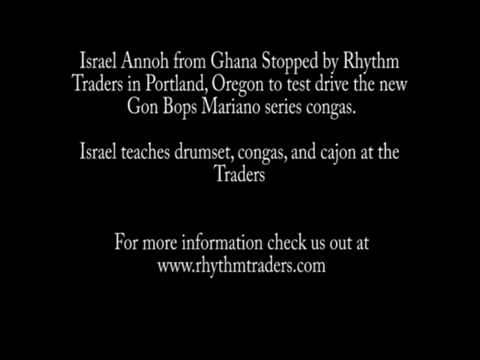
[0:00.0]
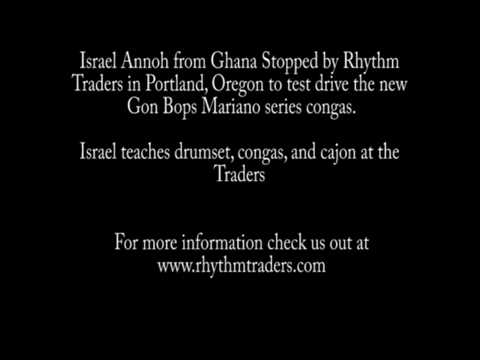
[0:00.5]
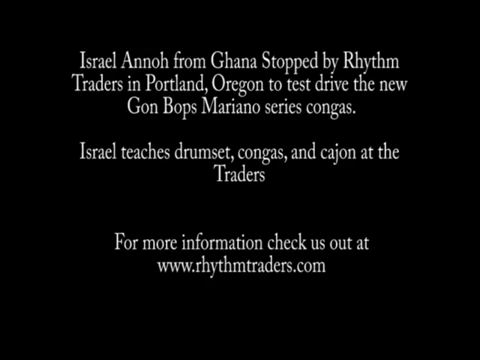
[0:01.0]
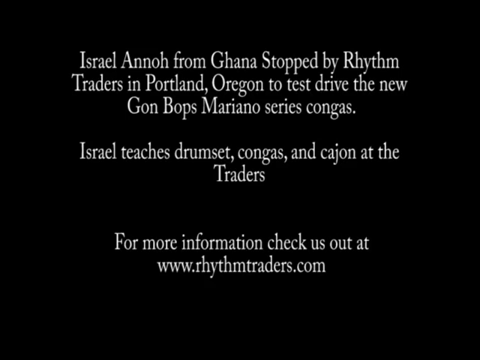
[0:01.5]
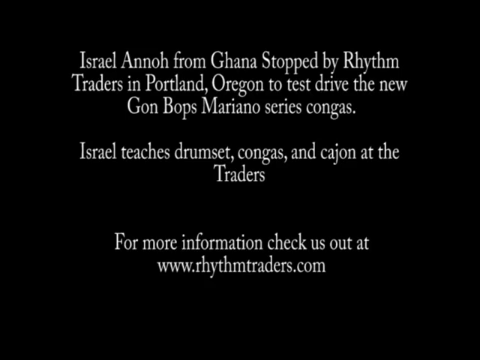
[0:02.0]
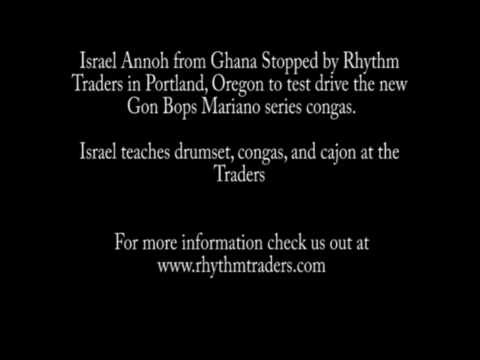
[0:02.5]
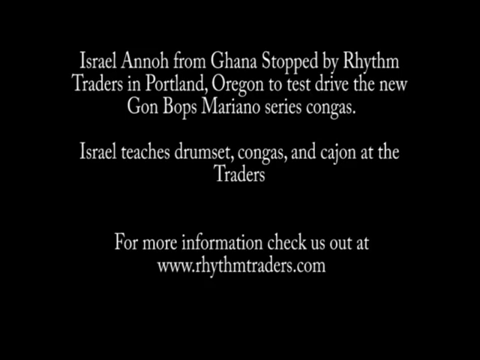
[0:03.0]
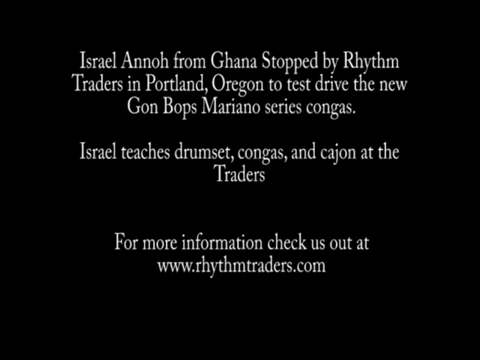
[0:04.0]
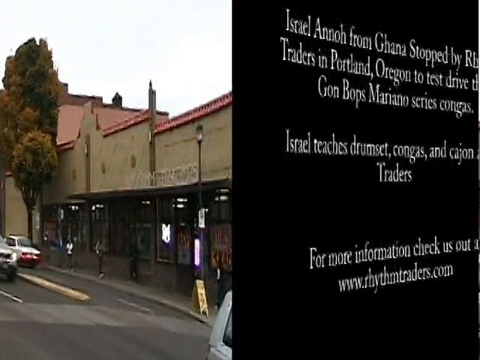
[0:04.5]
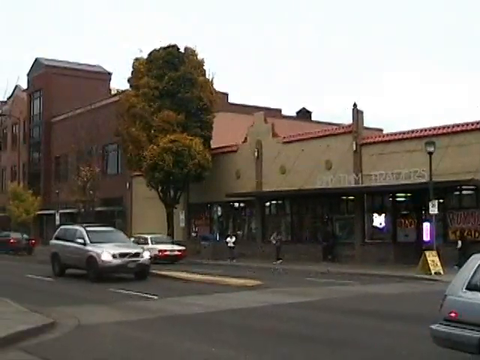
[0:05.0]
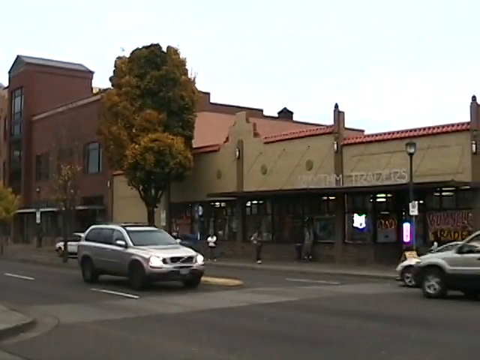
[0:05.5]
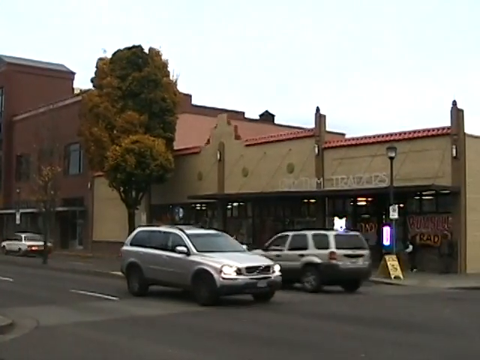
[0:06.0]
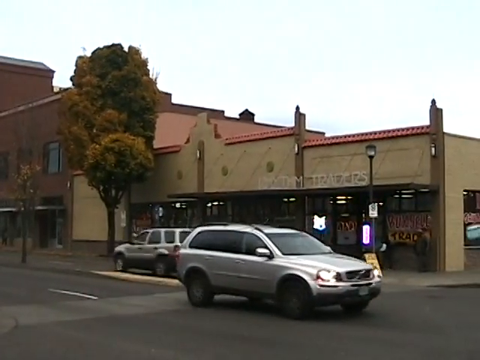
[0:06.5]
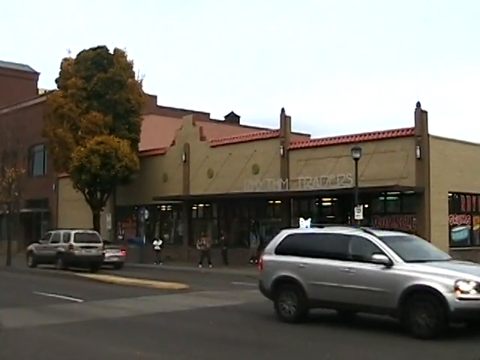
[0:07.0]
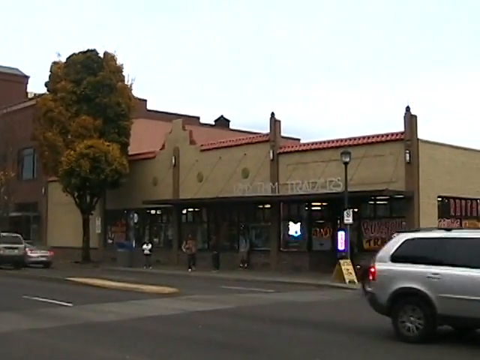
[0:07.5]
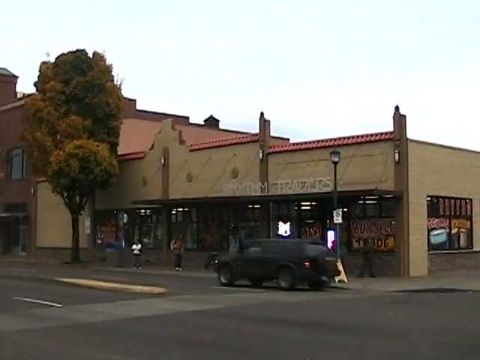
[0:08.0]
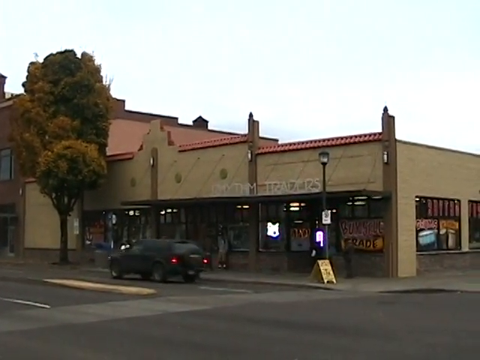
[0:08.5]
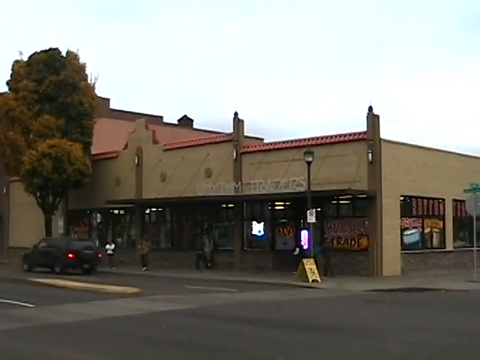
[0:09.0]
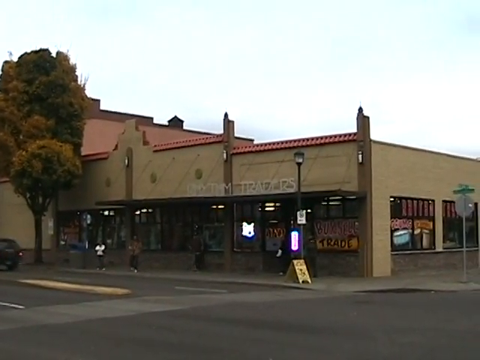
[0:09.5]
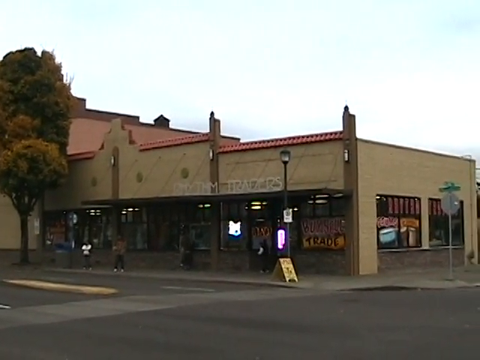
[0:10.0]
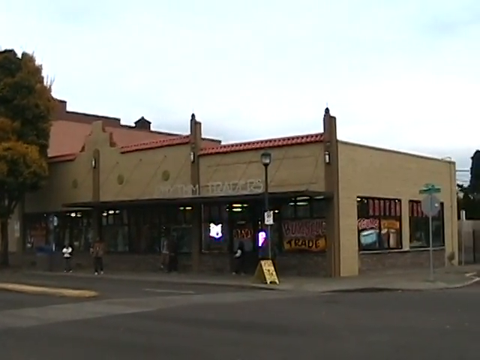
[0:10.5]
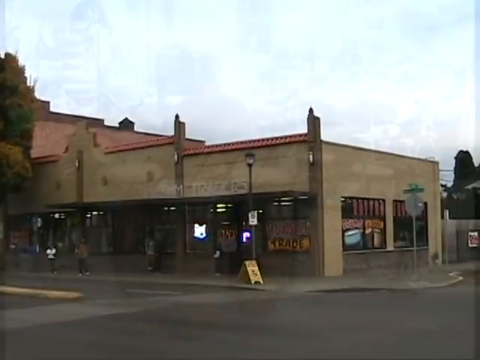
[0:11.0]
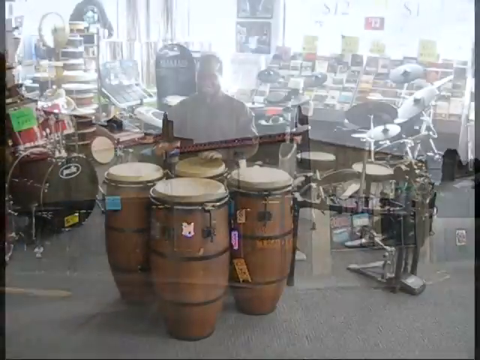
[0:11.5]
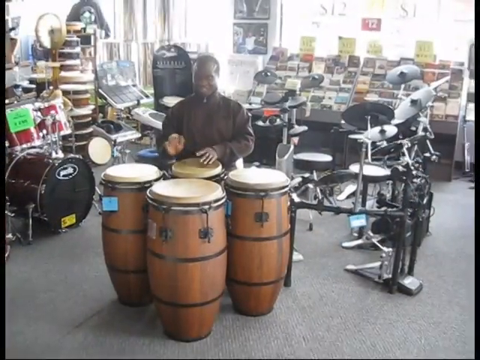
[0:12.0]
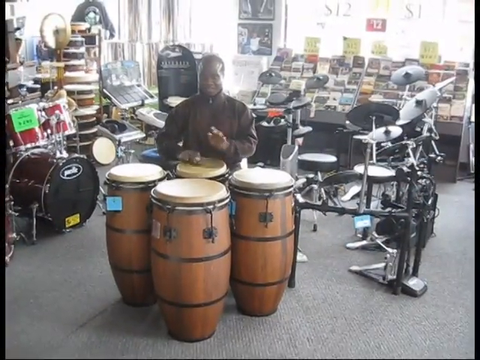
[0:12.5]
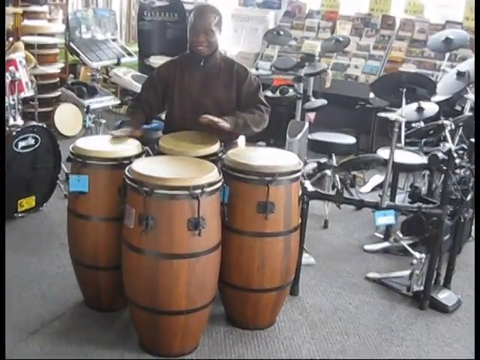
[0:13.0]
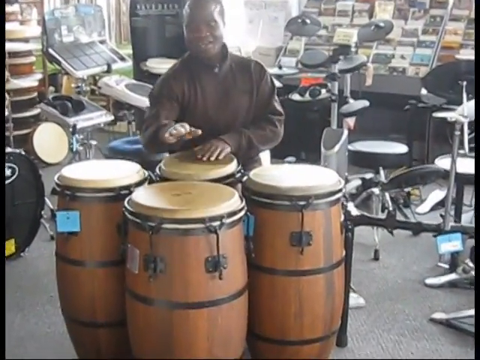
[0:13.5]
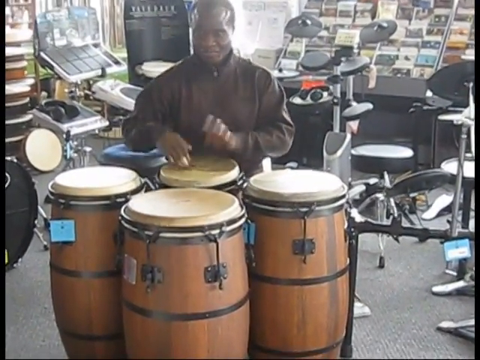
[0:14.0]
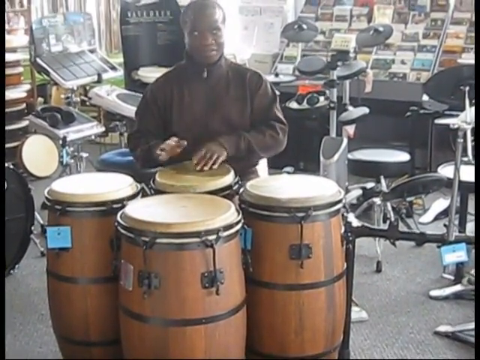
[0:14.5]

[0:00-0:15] The video looks like something documentary-style. It shows a road with some cars, and then somebody playing some kind of drums, either a drum set or congas. Based on the image quality, it appears to be an older video. The man playing is African-American, and it looks like he is playing at Rhythm Traders.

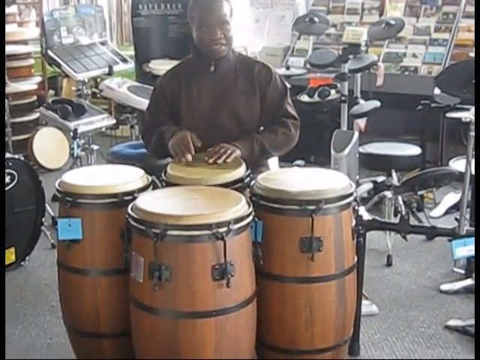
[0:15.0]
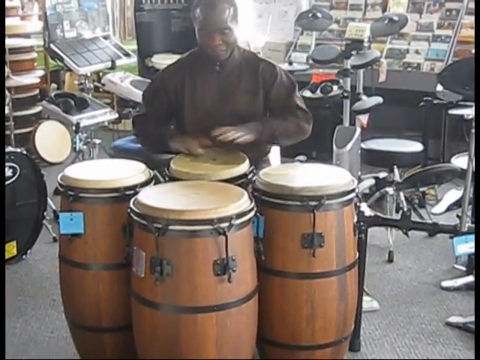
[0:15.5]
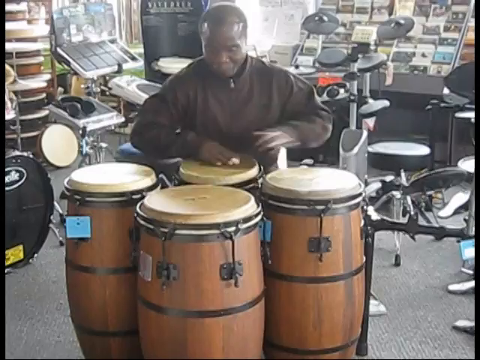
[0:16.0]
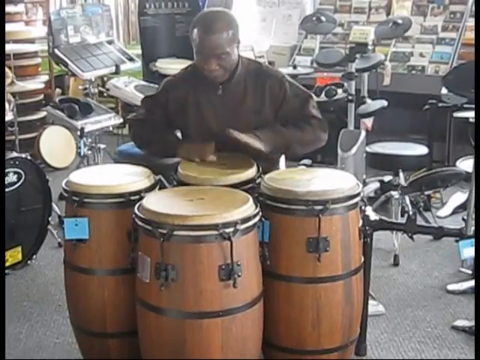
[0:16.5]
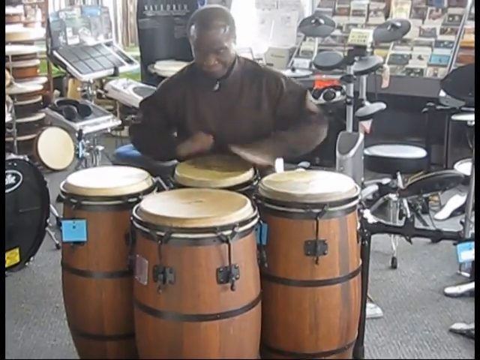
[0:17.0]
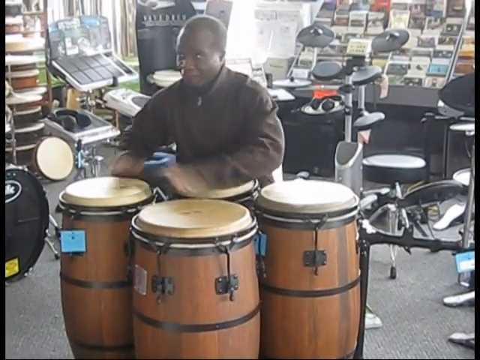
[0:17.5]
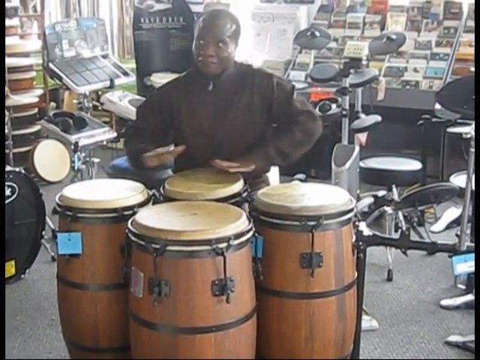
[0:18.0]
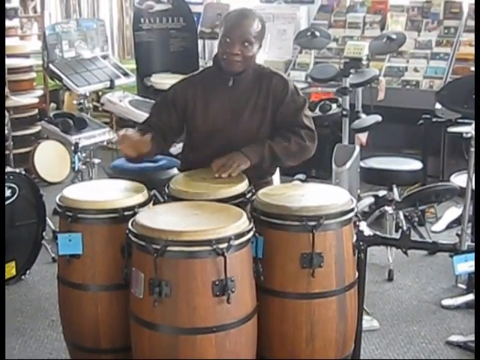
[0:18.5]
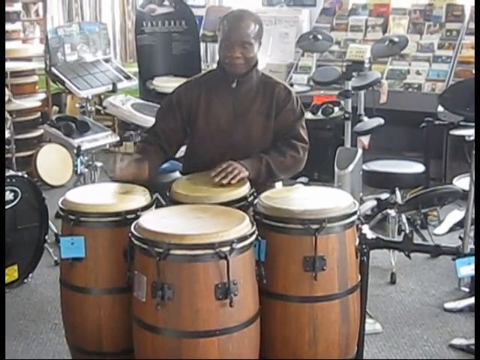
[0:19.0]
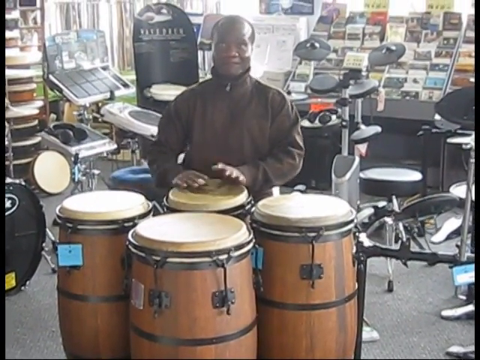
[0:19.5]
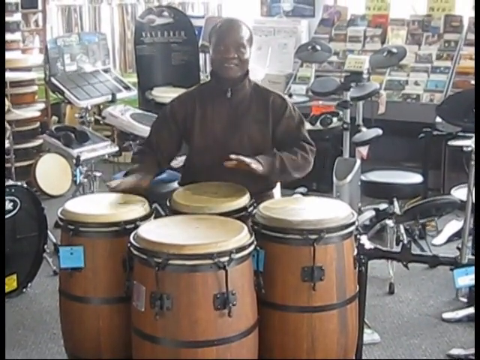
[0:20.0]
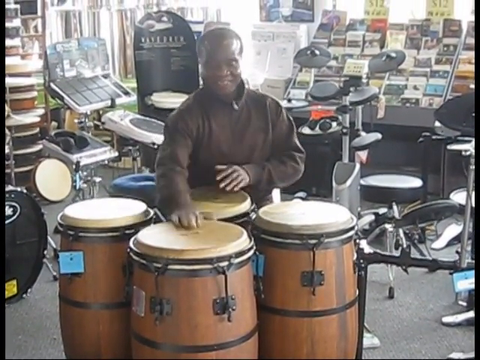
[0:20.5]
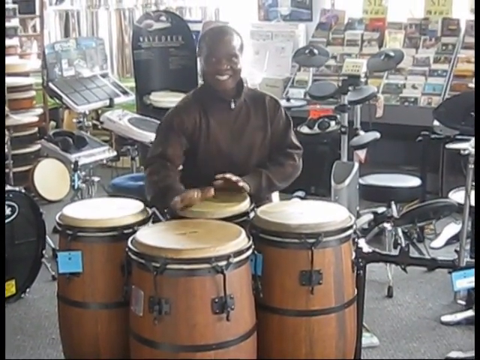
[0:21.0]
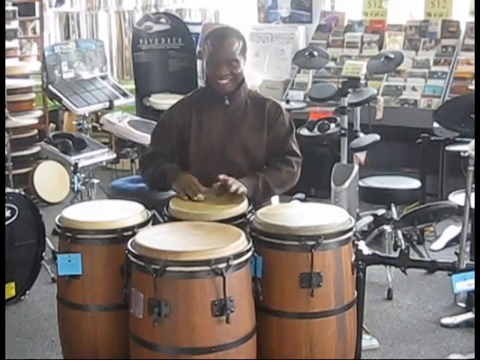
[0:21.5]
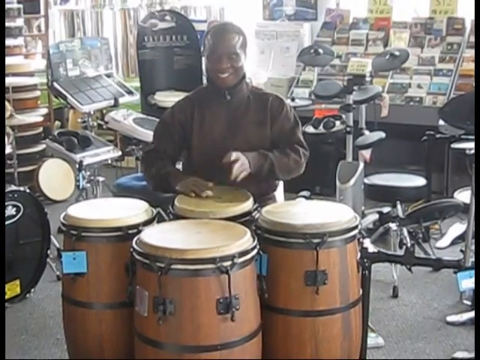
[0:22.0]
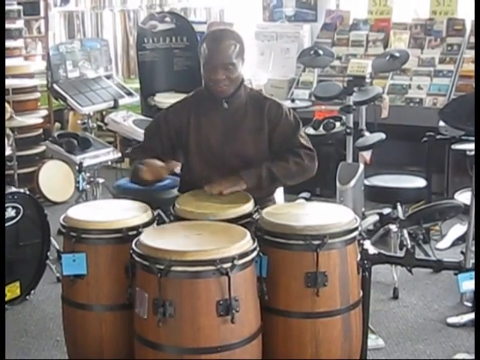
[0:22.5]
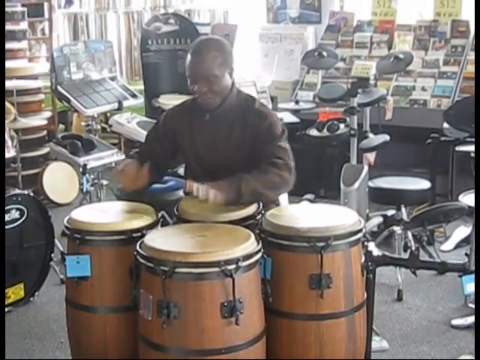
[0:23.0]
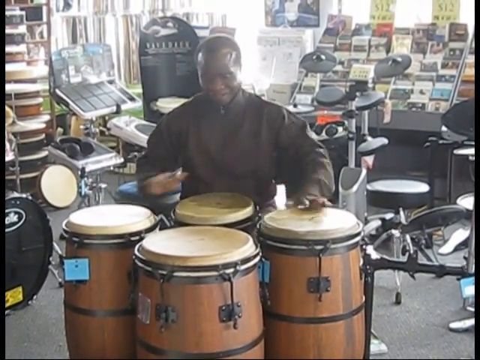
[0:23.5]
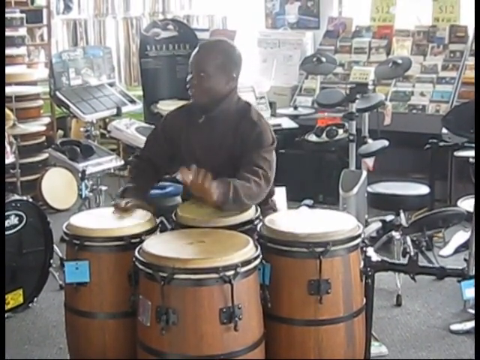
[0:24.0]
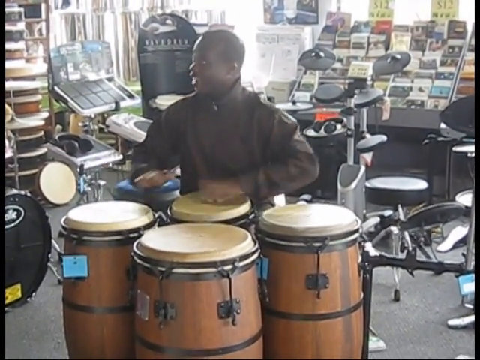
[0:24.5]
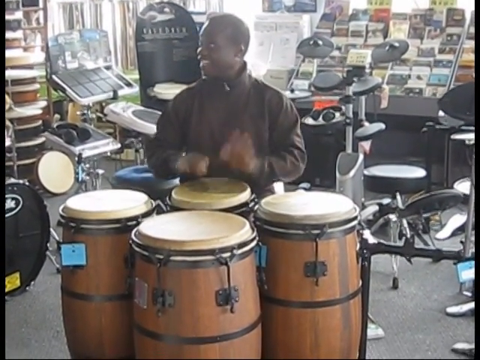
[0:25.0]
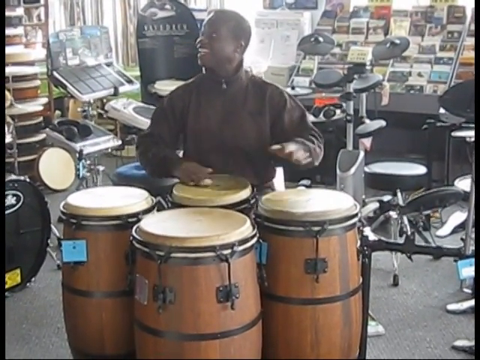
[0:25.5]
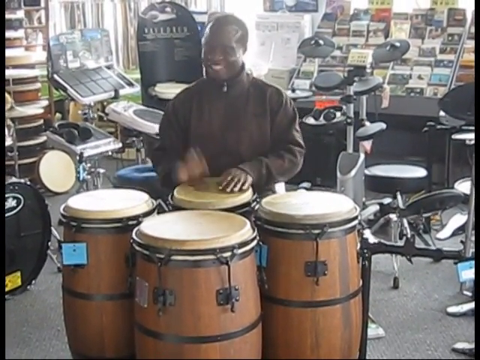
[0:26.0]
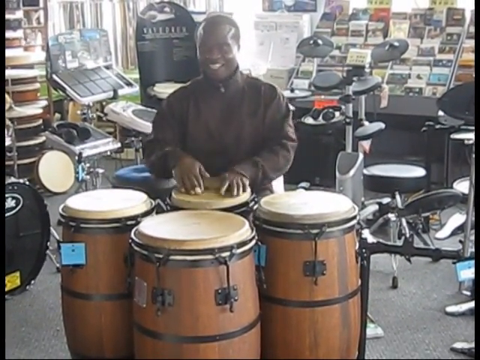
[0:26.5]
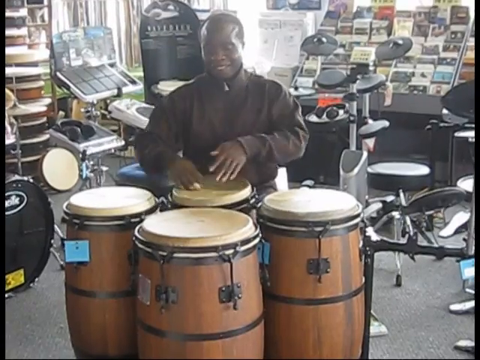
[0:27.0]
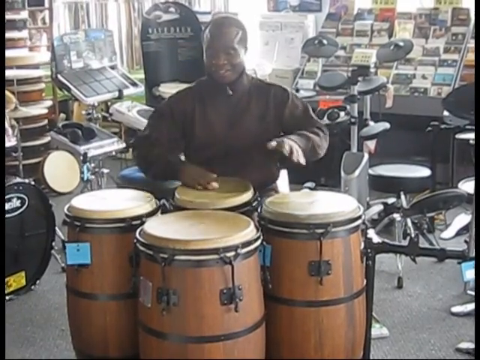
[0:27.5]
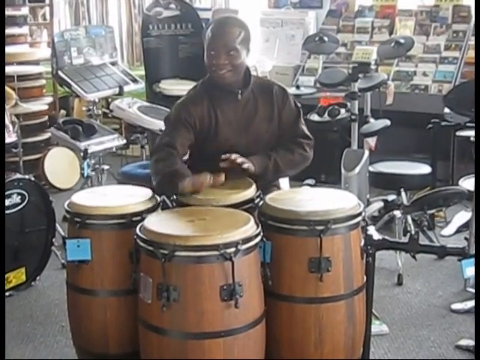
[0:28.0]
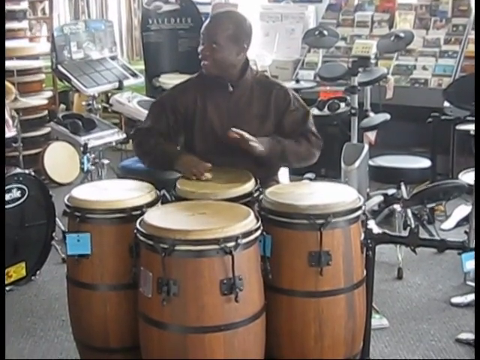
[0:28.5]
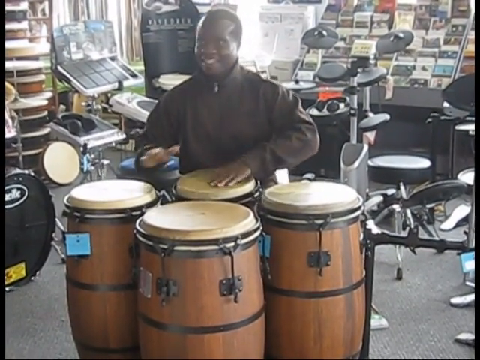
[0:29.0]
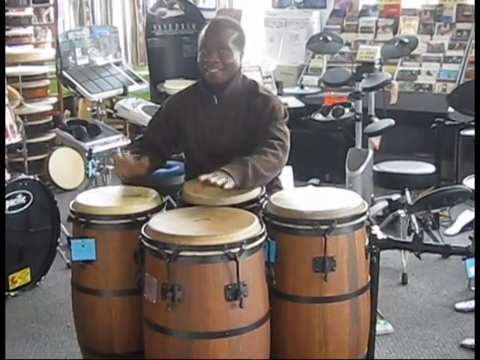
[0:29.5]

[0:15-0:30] The man appears to be playing the congas fast. He is very energetic and smiling, and looks like he is enjoying himself and the energy in the room. He may be talking to somebody as he plays. He is showing off his skills. The shop possibly sells musical equipment, and there may be a tag on the congas that could be a price tag. Sunlight comes through behind the man, so he is a bit backlit. He is wearing long sleeves, which may suggest colder weather.